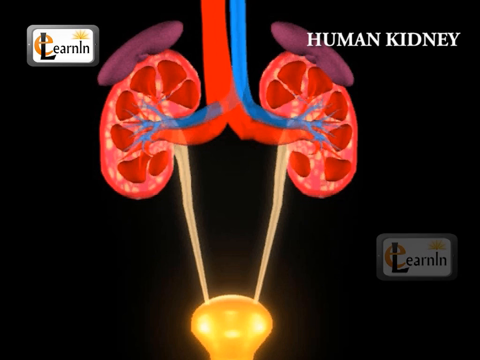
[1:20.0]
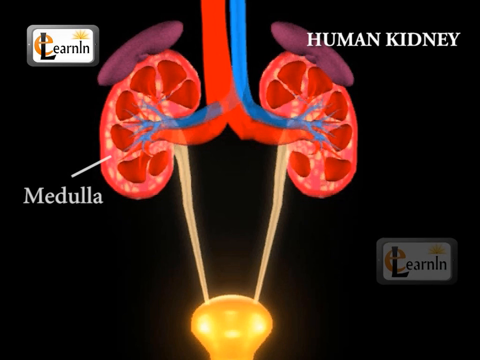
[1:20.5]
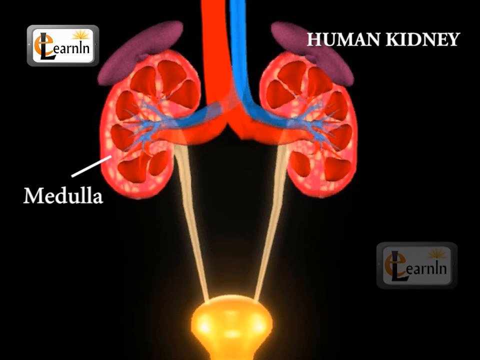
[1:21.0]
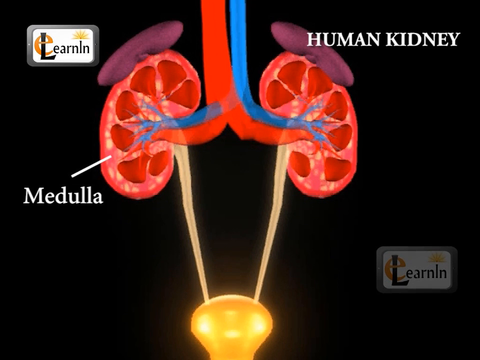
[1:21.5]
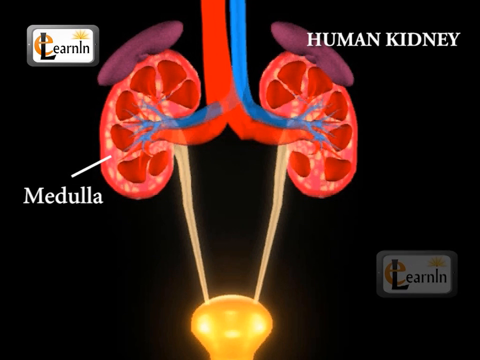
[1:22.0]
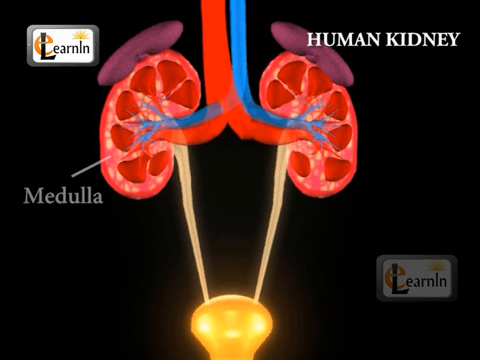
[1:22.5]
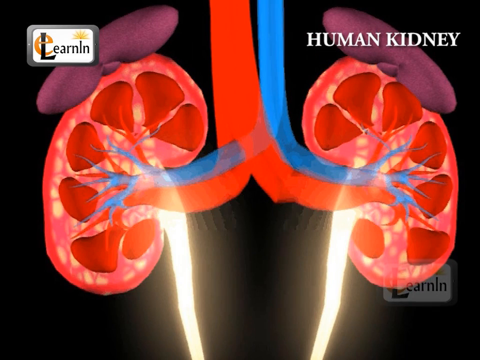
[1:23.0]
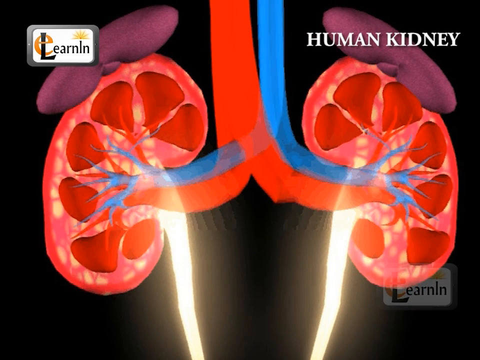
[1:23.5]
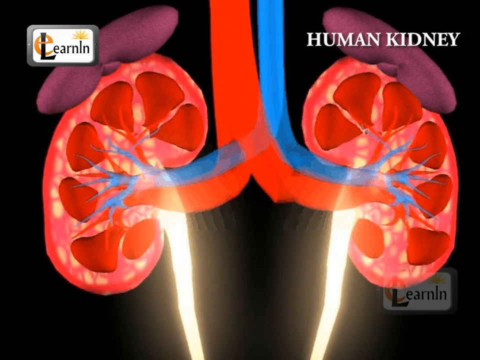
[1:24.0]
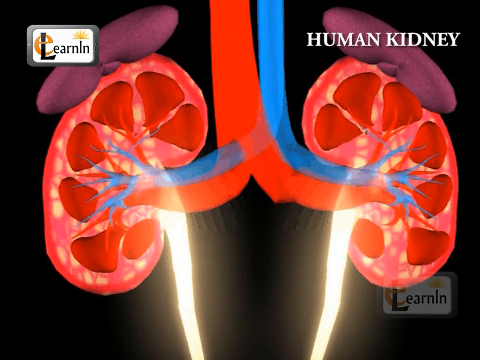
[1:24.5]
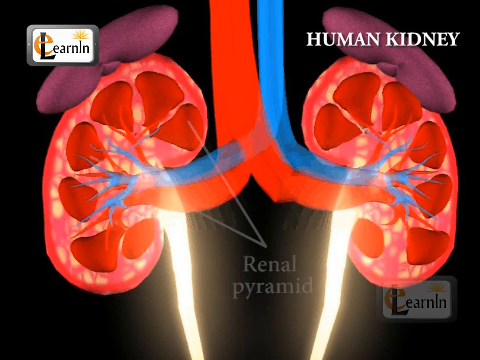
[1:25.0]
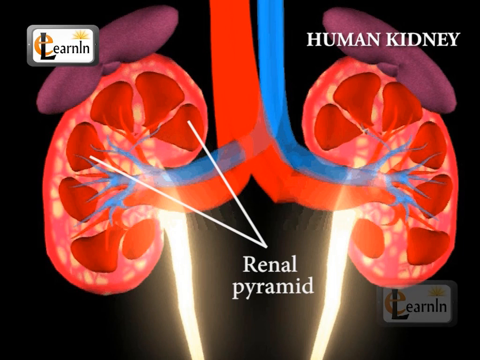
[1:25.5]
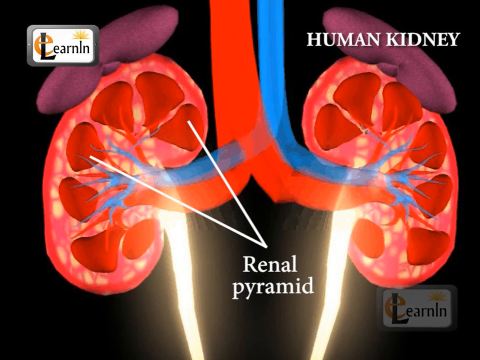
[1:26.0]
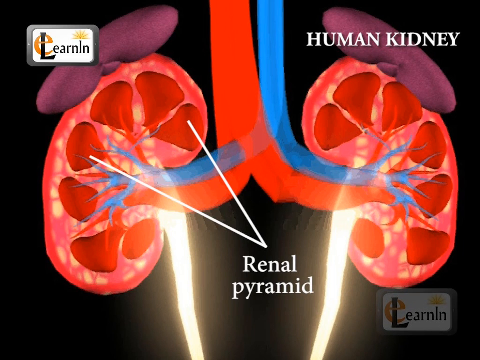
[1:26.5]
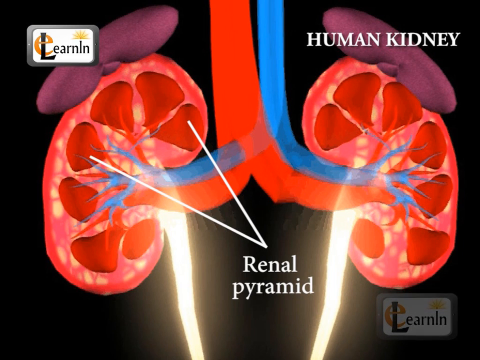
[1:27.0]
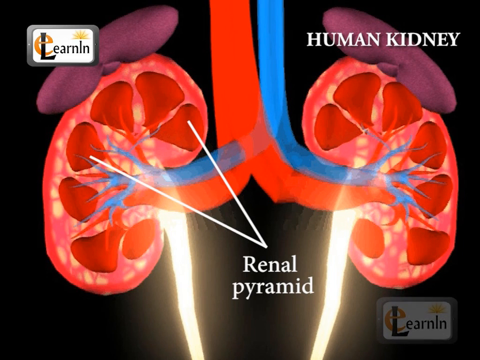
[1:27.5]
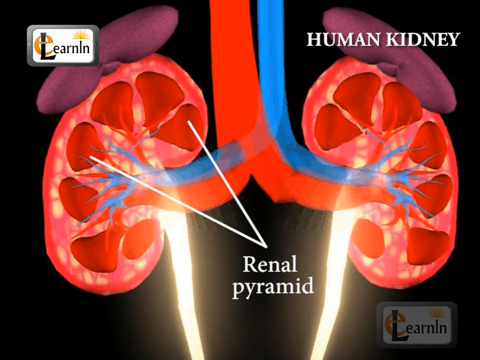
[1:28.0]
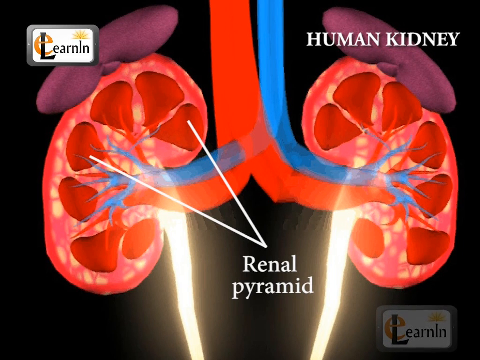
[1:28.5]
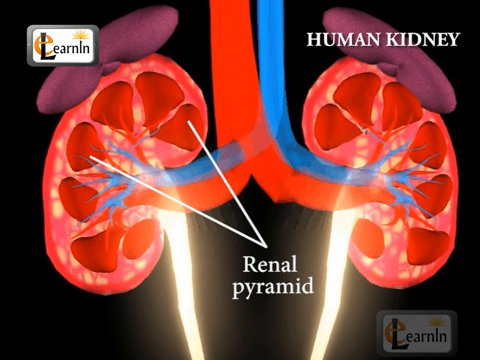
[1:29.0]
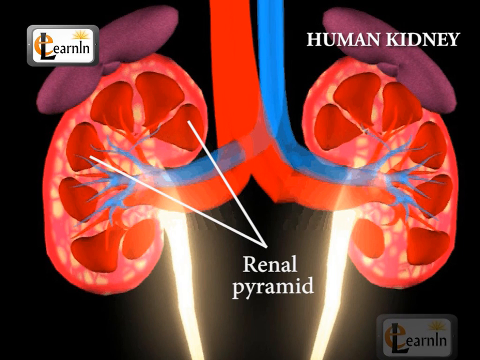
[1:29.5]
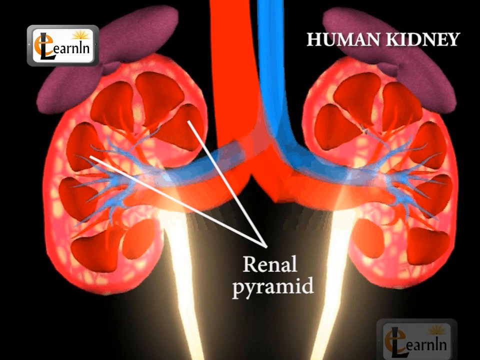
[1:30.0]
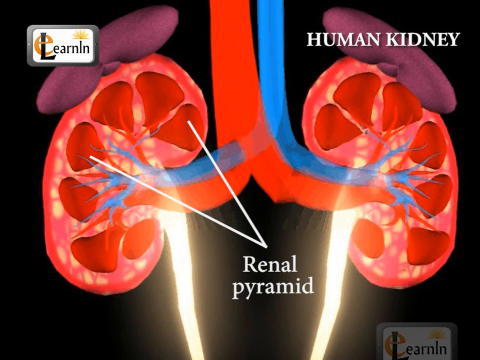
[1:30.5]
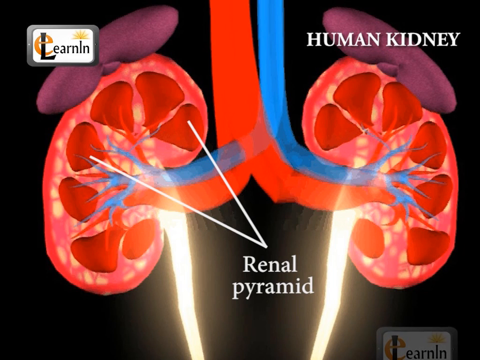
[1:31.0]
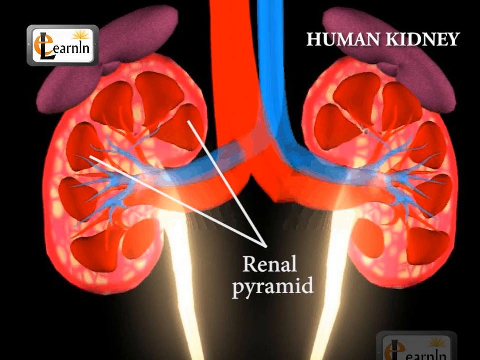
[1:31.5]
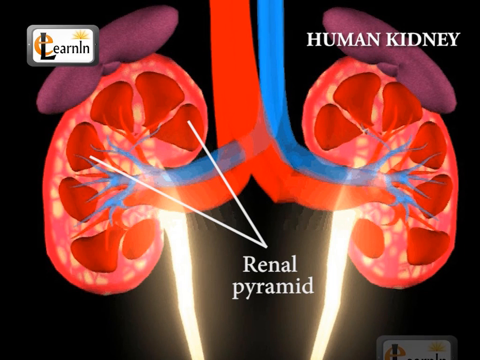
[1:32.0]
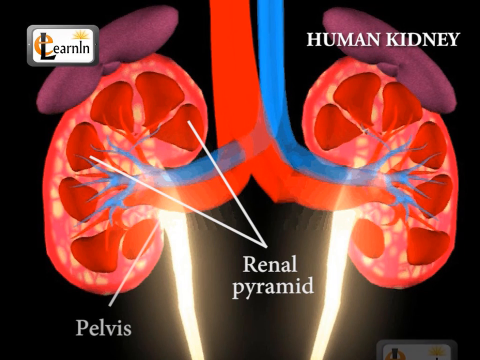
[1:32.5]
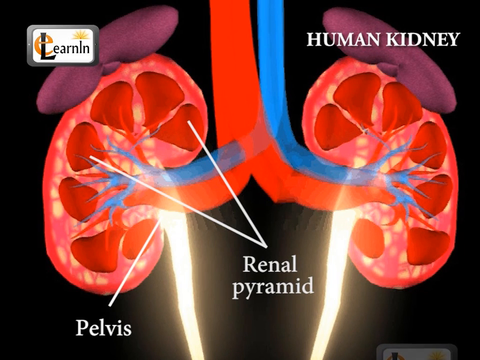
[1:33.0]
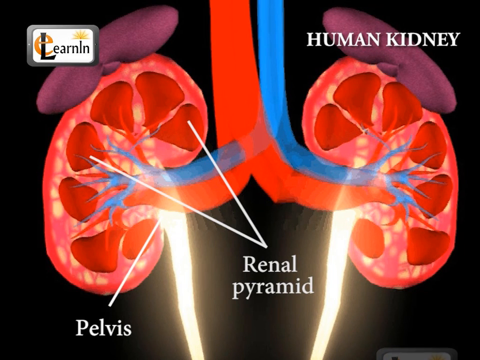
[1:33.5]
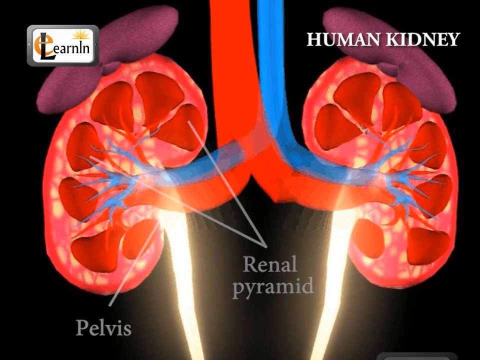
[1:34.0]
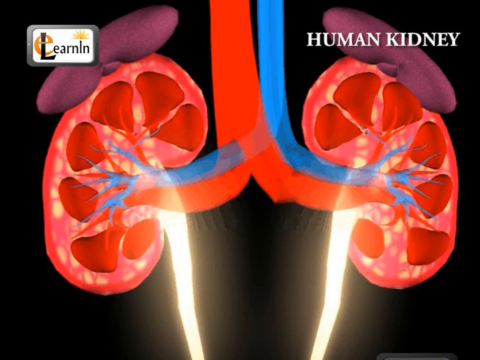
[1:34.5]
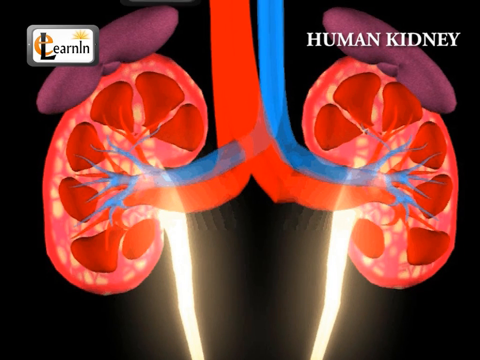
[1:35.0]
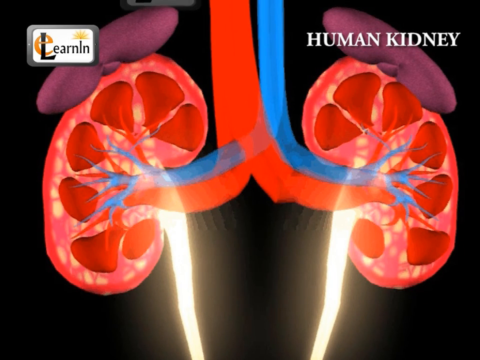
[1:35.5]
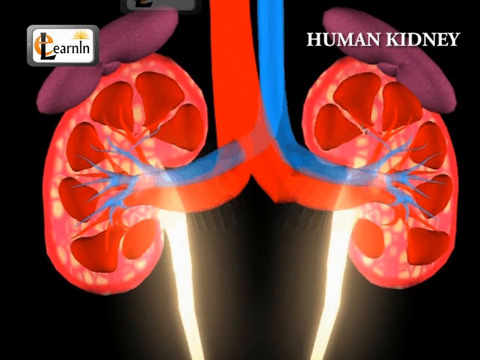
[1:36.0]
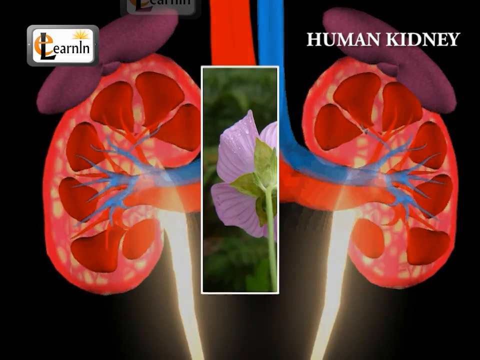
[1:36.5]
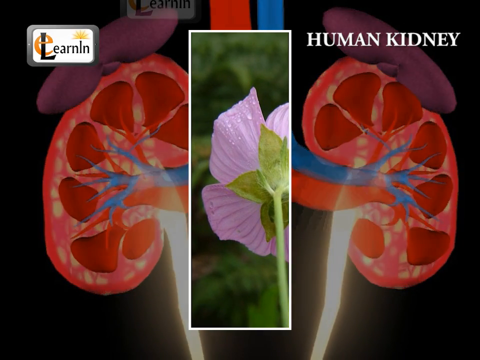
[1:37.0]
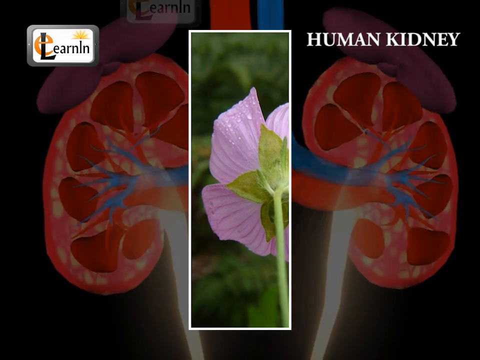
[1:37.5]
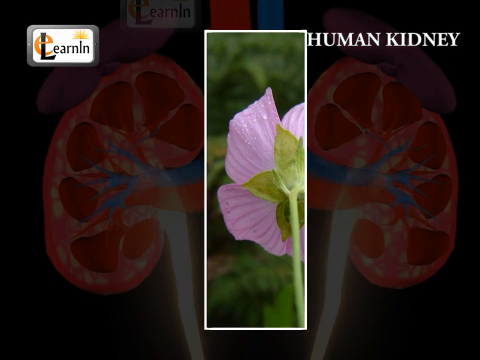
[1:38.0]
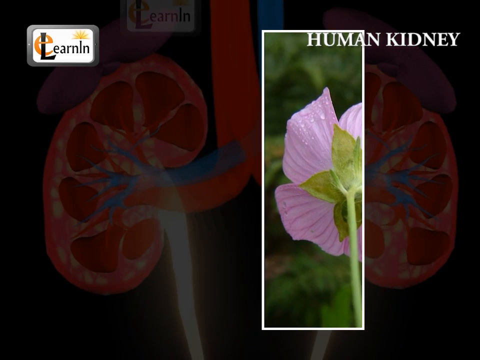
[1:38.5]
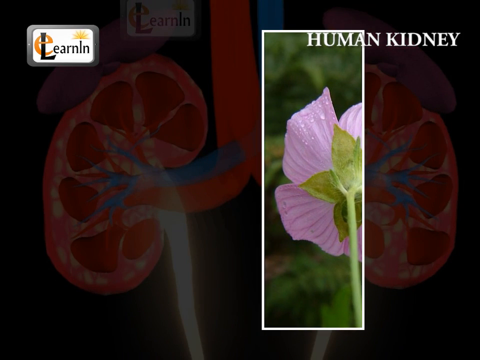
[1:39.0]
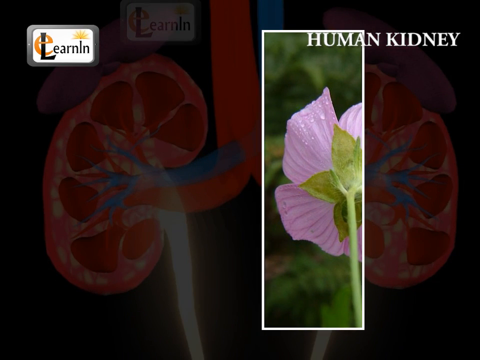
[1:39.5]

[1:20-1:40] A schematic representation of the human renal apparatus shows two reddish structures placed symmetrically on either side of a central axis made up of two structures, one red and one blue. At the top right is white writing on the black background, and at the bottom left is more white writing on the black background, connected by a rather thin white segment to one of the two kidneys. The camera approaches the two kidneys, and two very bright structures are visible in the lower part of the frame, moving away from the kidneys toward the bottom. White writing appears on the black background in the central part of the screen, connected to two red structures in the illustration by two rather thin white segments joined at one end.